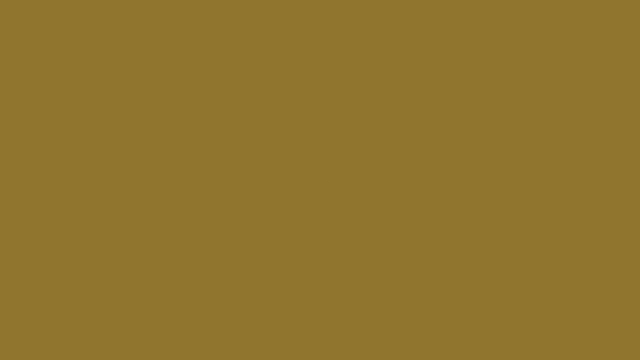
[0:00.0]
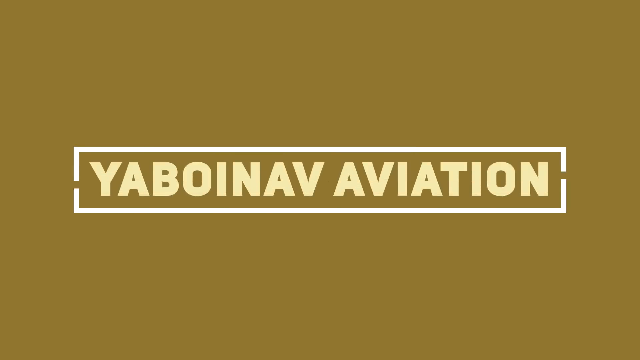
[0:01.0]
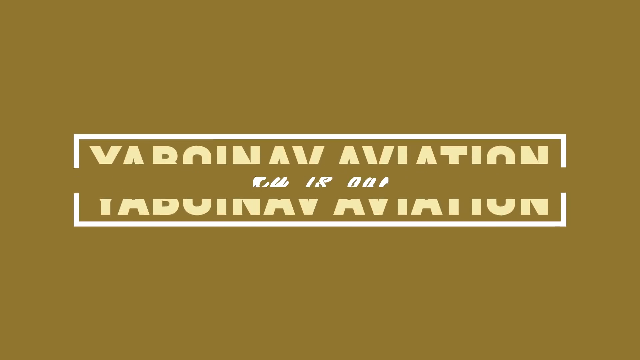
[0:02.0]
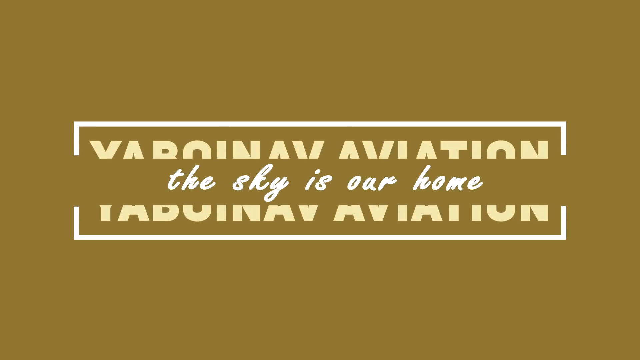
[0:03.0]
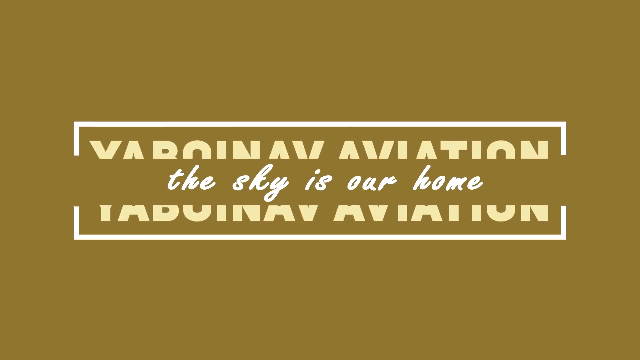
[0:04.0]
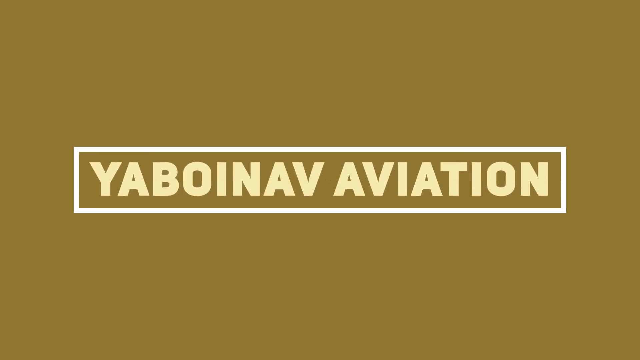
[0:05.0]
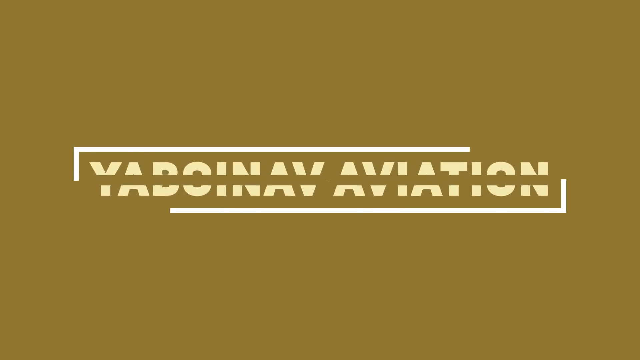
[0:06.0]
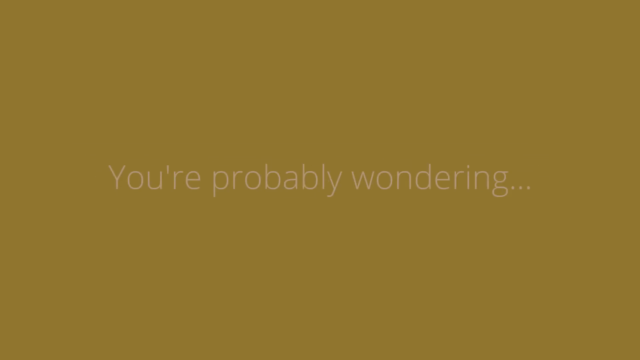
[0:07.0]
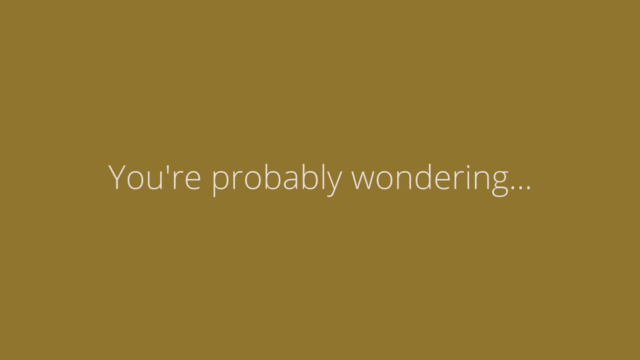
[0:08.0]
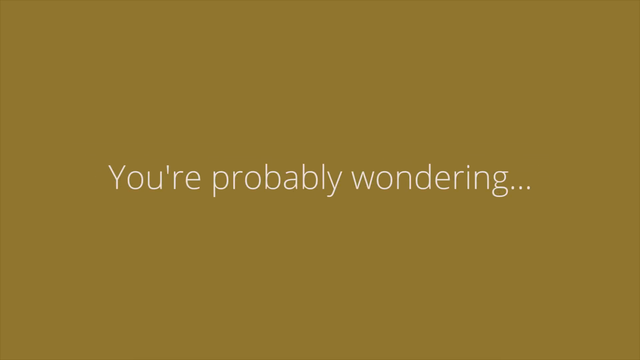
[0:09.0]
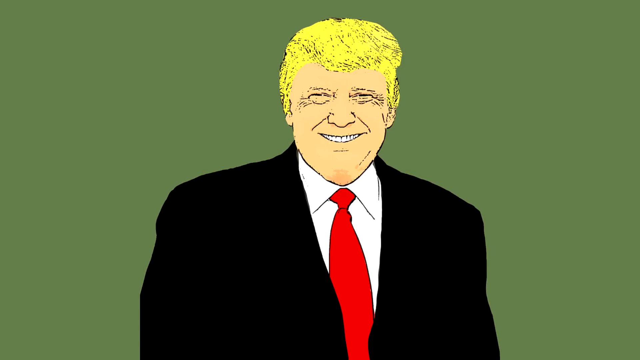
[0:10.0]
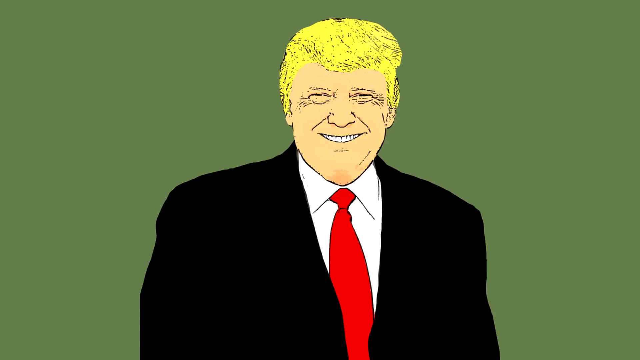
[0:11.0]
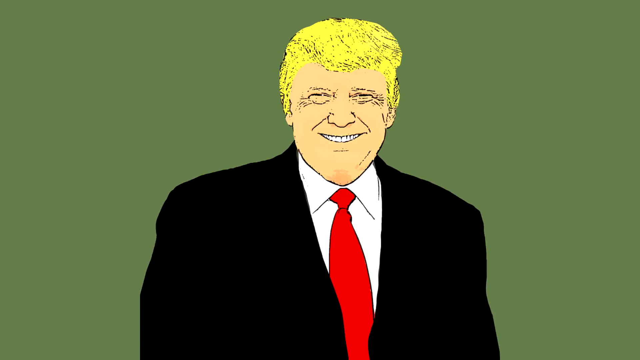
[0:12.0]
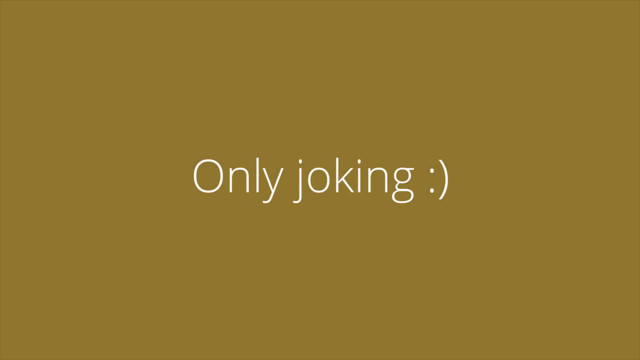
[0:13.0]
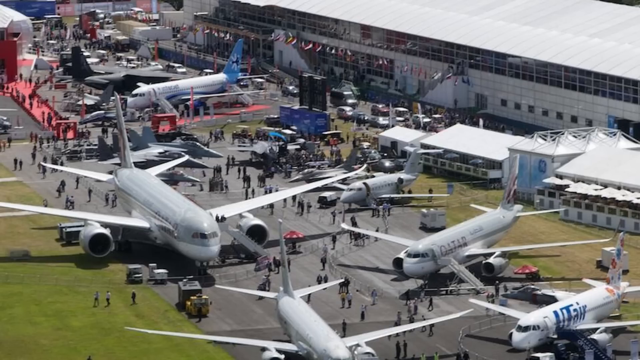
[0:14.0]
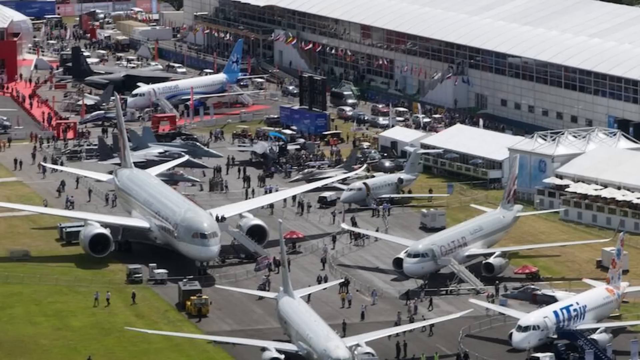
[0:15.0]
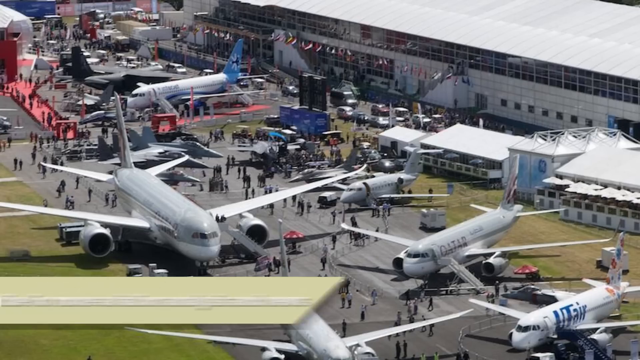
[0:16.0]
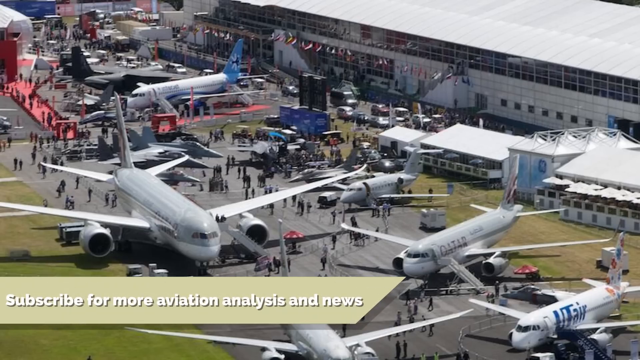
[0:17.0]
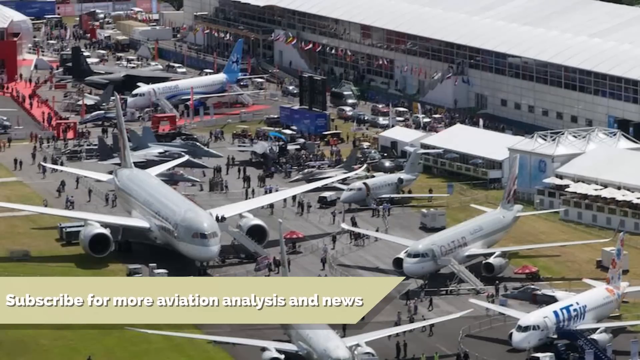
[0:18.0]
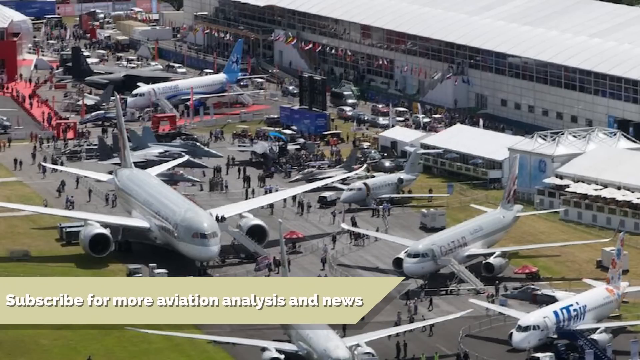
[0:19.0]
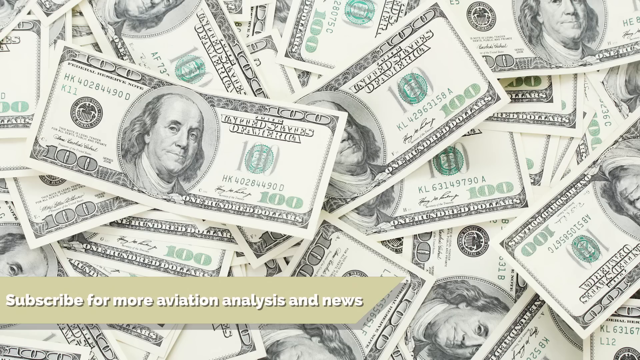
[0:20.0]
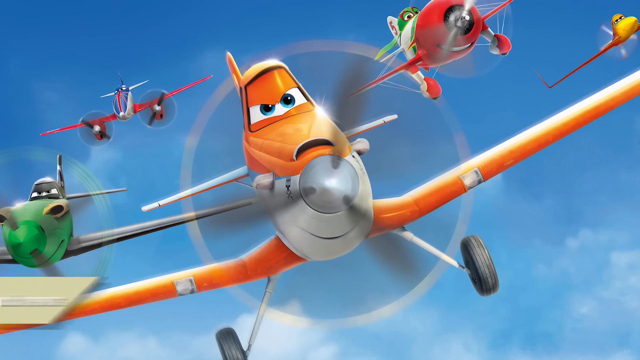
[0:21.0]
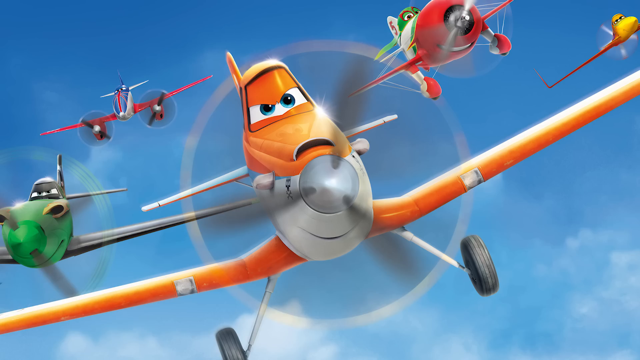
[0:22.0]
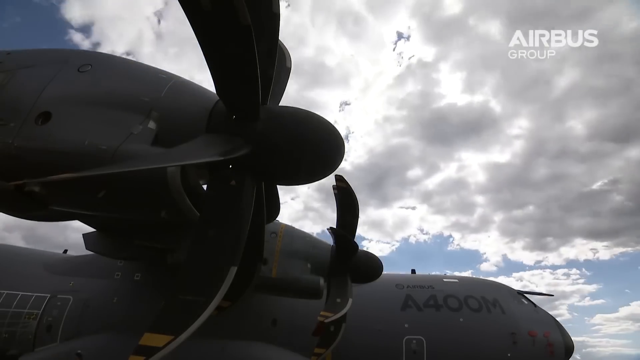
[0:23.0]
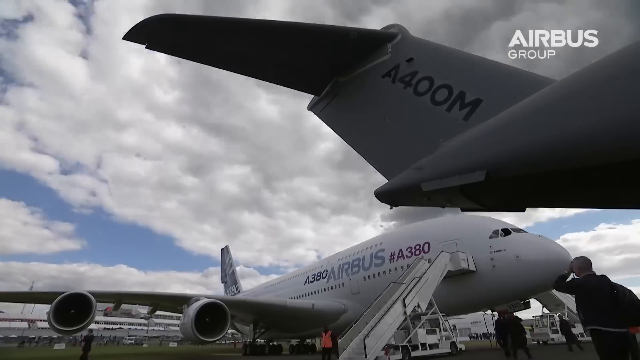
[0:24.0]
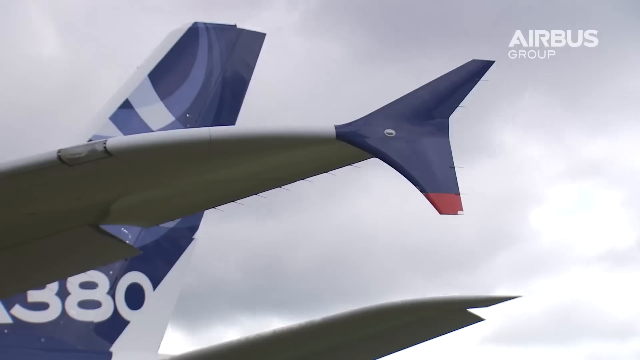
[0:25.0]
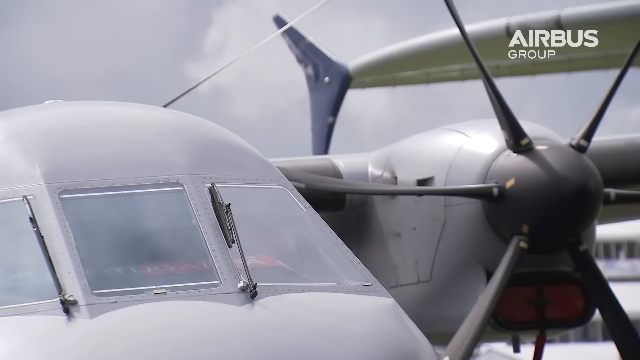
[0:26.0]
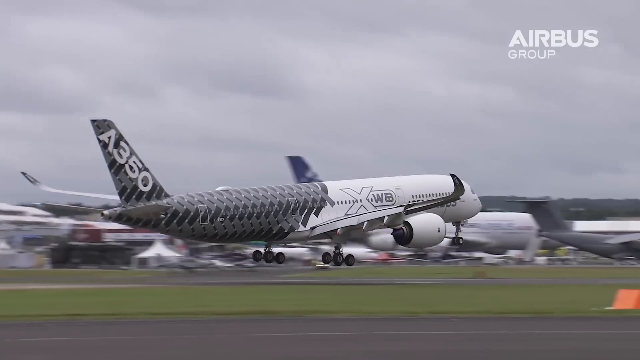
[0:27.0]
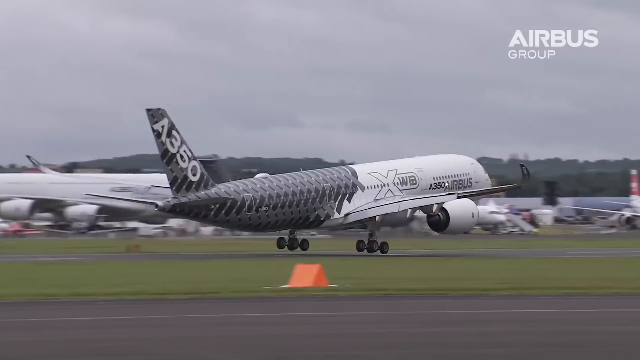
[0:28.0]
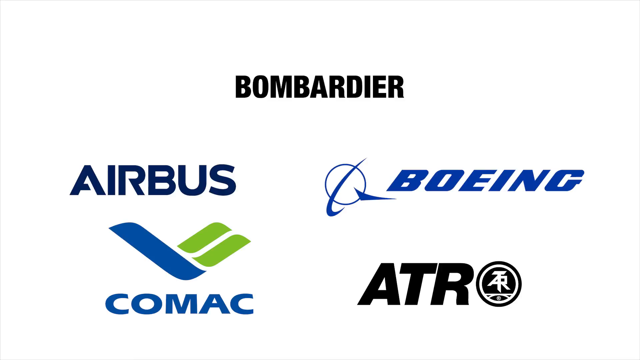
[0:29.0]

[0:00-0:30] The video opens with the words "Yaboinav aviation" enclosed in a white line. The words break apart into two, one moving up and one down, and in the middle appears the phrase "the sky is our home". The words "Yaboinav Aviation" are then pieced back together. They disappear and the words "You're probably wondering ..." appear. Next comes a caricature of a blonde-haired man in a black suit, white undershirt and red necktie, grinning at the camera against a green background. The caricature disappears, replaced by a brown background with the words "Only joking :)". The video cuts to what looks like a busy airport with many airplanes and many people on the ground, with an insert on the left side of the screen reading "subscribe for more aviation analysis and news". It then cuts to a lot of money, stacks of $100 bills. Footage from the movie Planes appears briefly, followed by planes flying and landing, and finally the Airbus and Boeing brands.